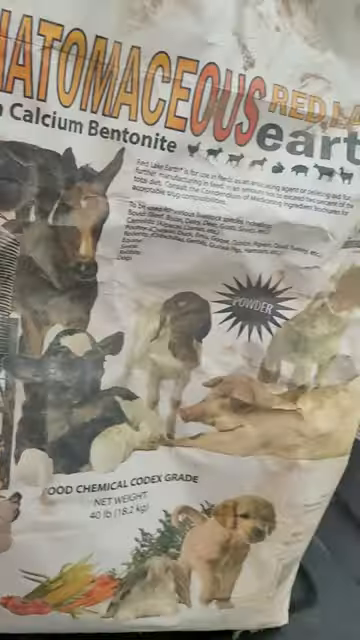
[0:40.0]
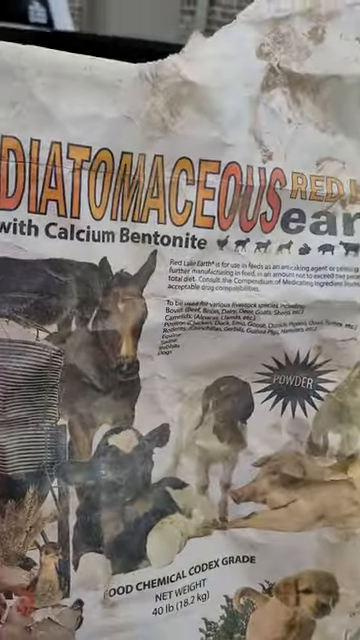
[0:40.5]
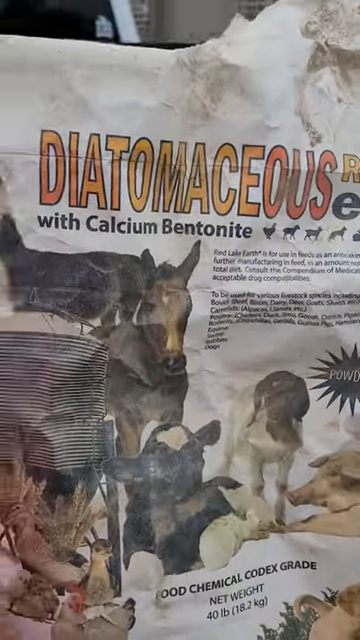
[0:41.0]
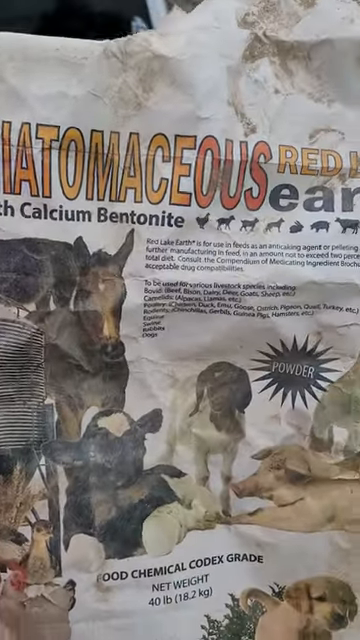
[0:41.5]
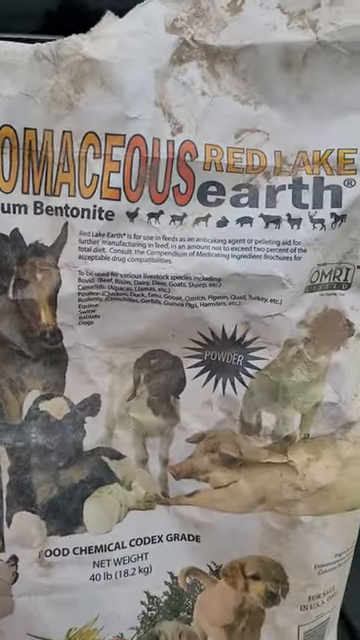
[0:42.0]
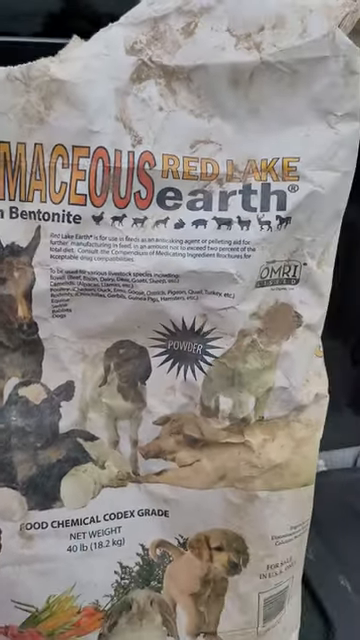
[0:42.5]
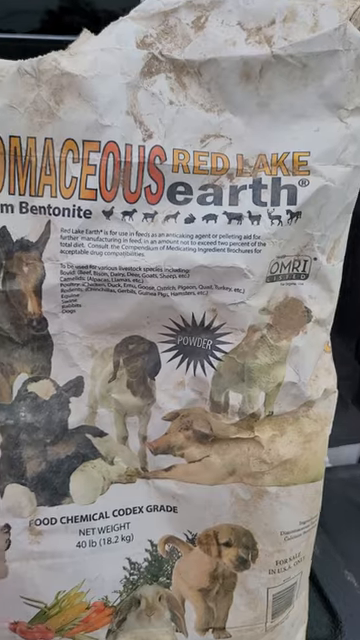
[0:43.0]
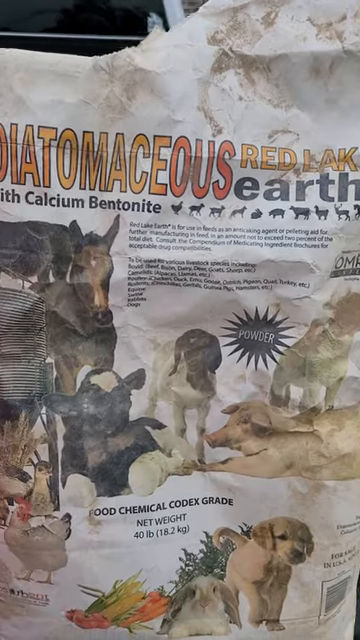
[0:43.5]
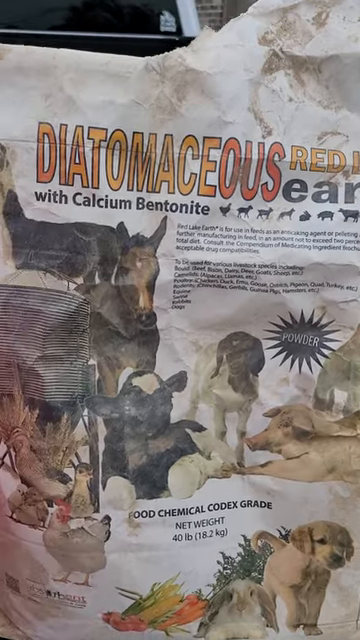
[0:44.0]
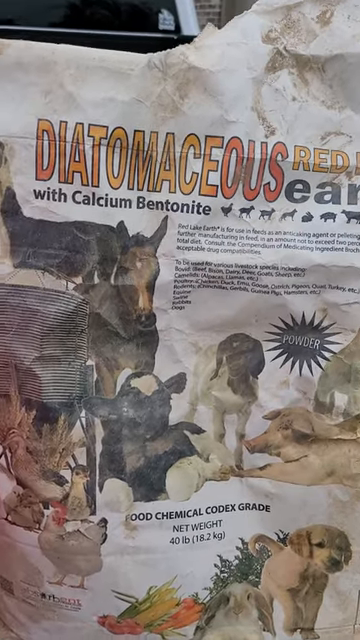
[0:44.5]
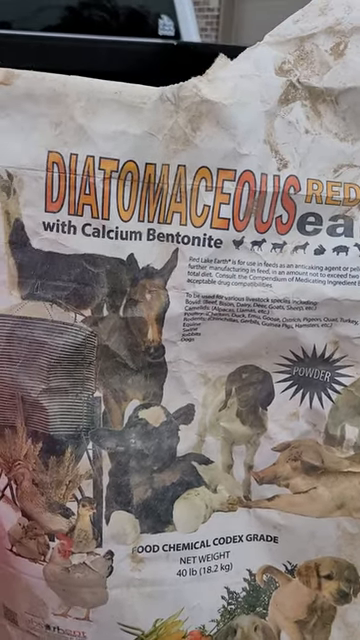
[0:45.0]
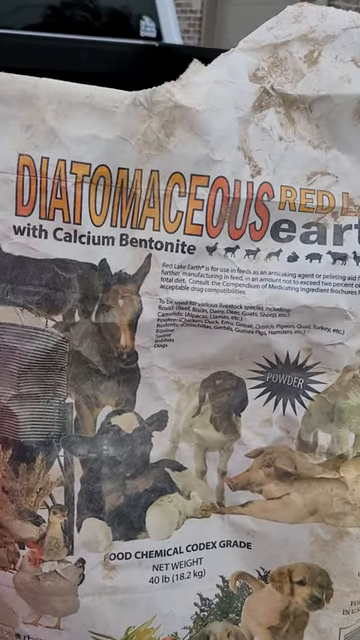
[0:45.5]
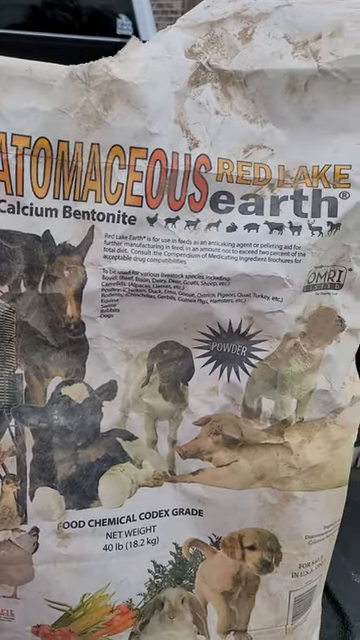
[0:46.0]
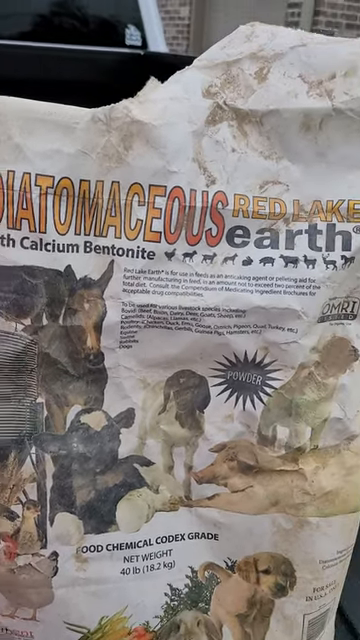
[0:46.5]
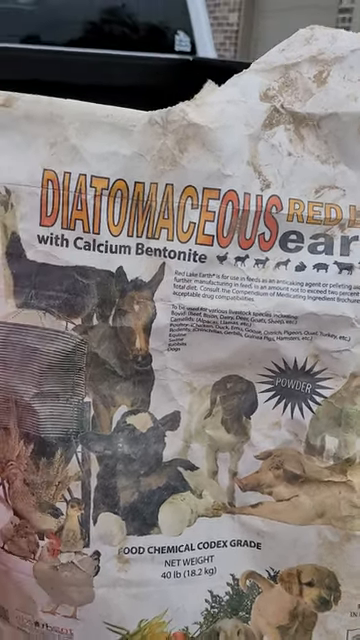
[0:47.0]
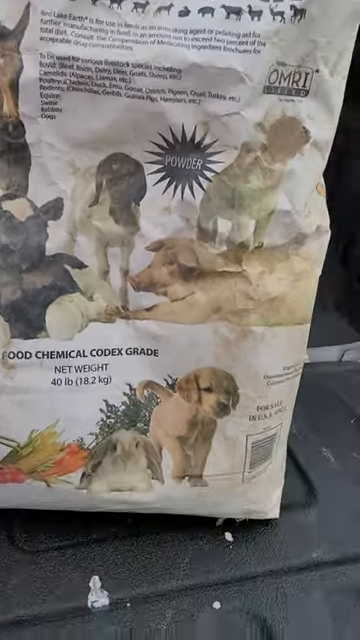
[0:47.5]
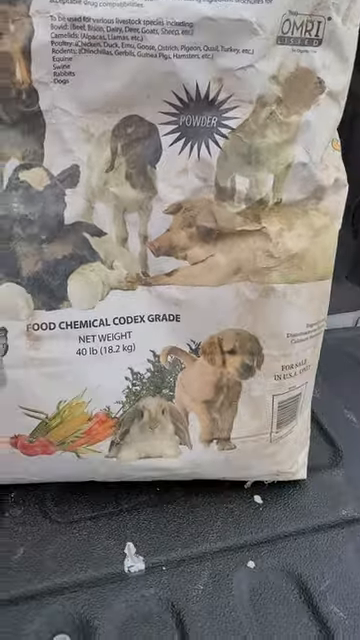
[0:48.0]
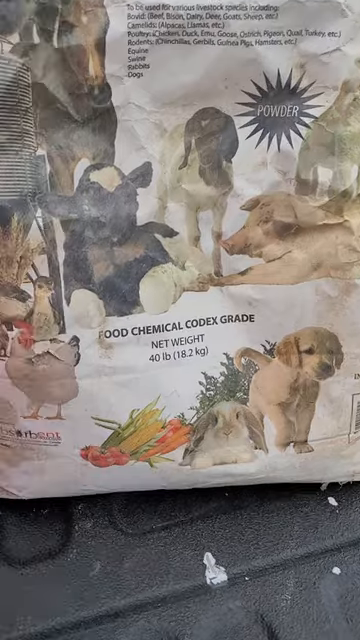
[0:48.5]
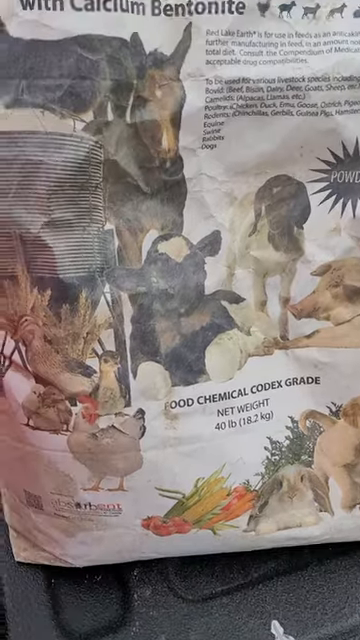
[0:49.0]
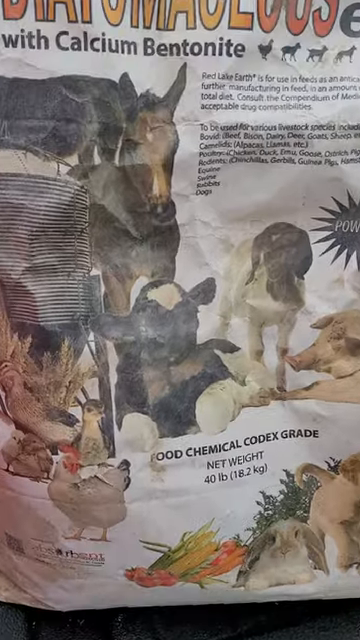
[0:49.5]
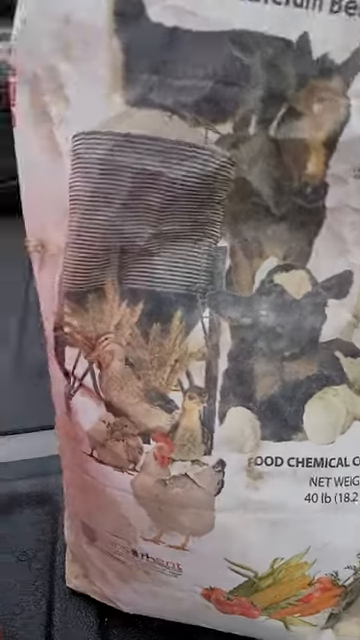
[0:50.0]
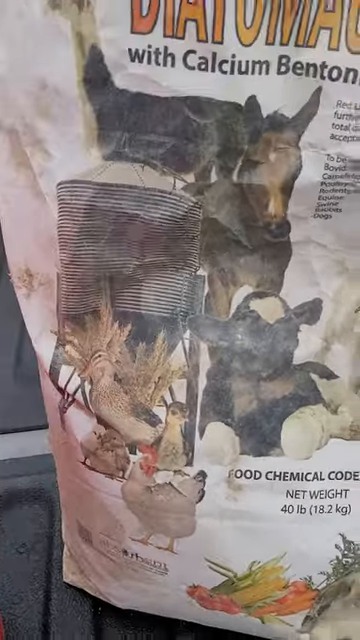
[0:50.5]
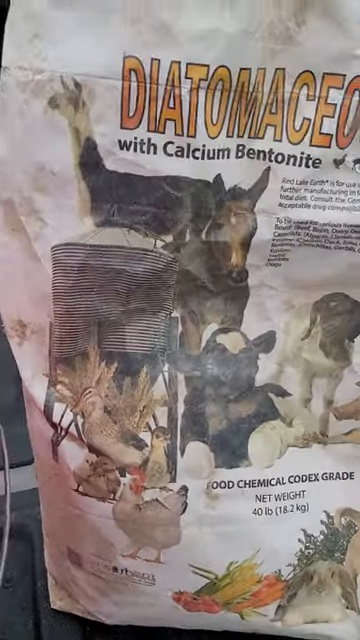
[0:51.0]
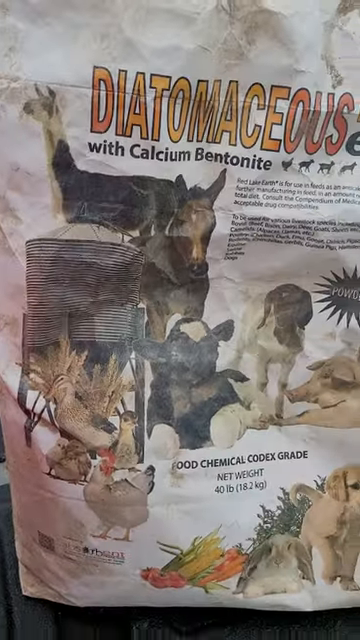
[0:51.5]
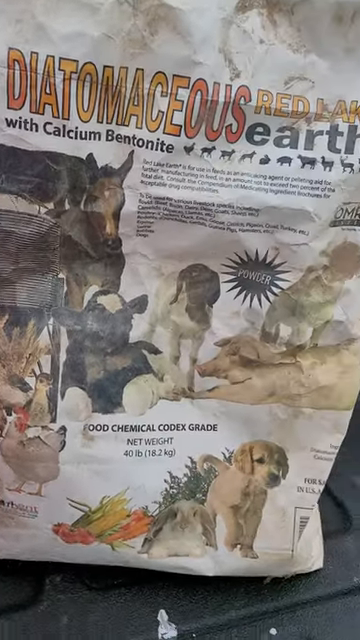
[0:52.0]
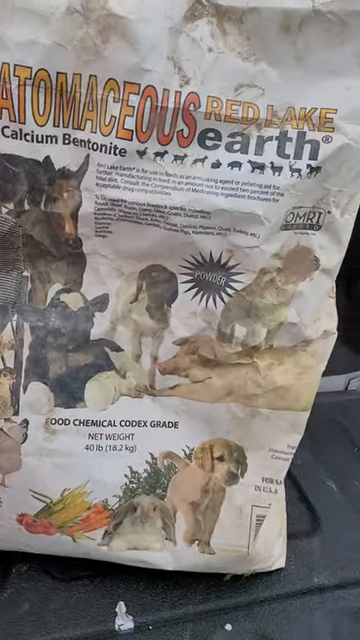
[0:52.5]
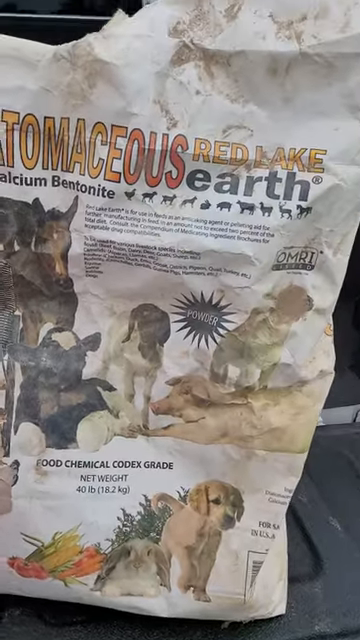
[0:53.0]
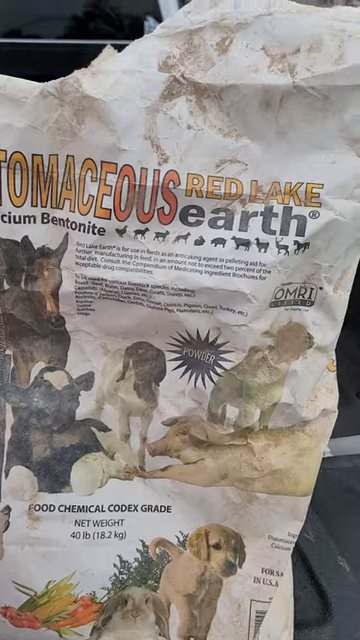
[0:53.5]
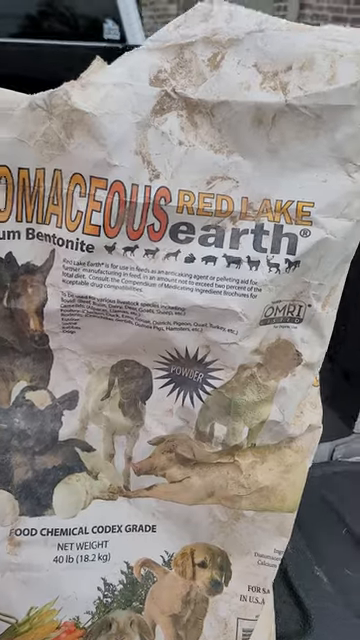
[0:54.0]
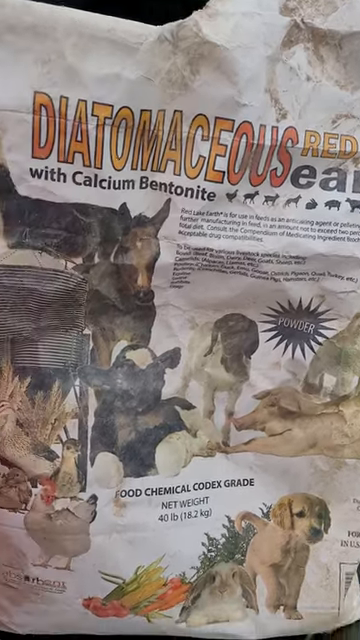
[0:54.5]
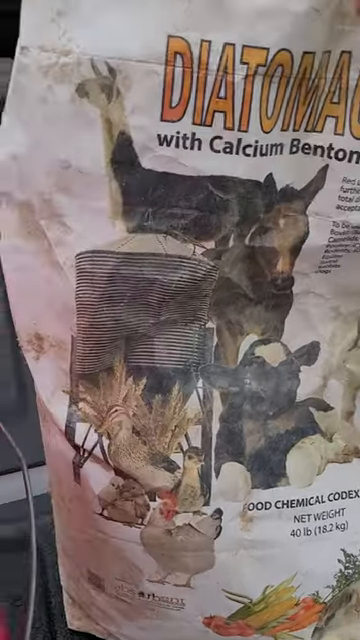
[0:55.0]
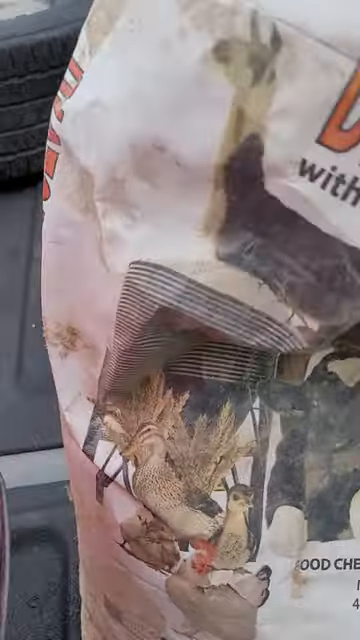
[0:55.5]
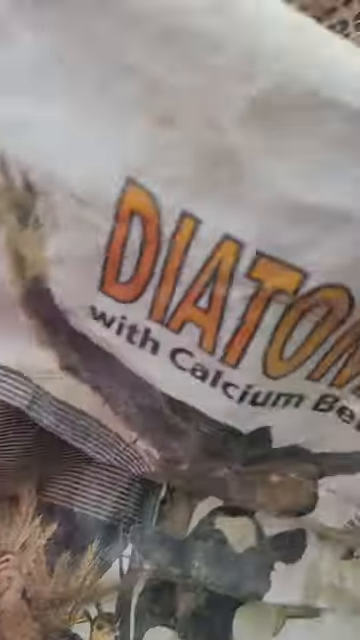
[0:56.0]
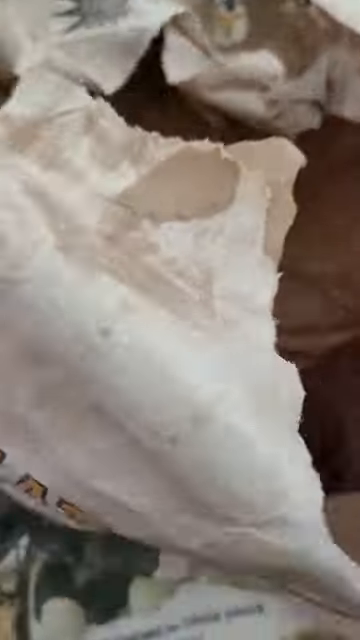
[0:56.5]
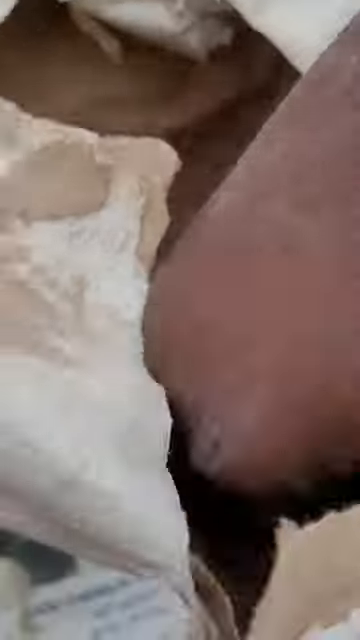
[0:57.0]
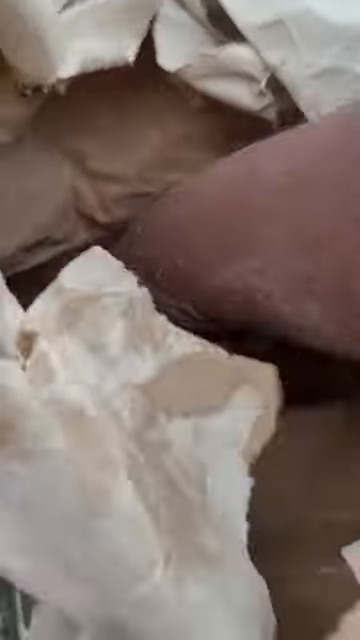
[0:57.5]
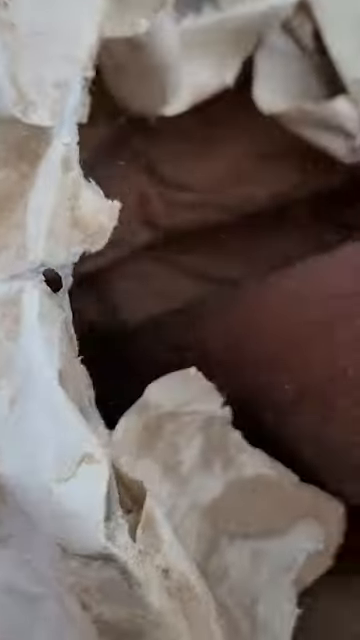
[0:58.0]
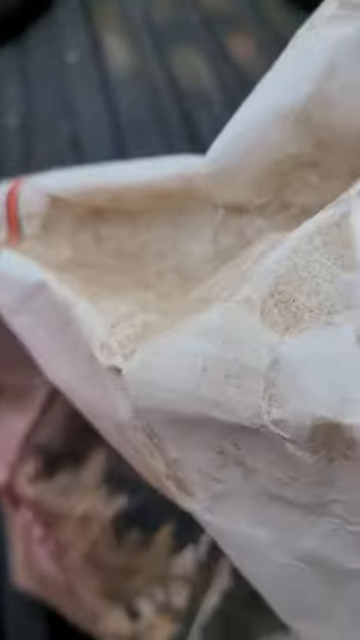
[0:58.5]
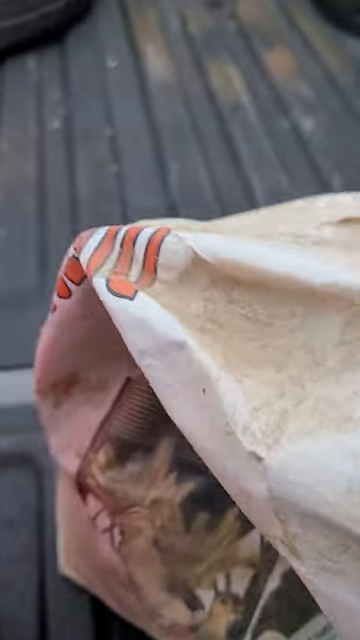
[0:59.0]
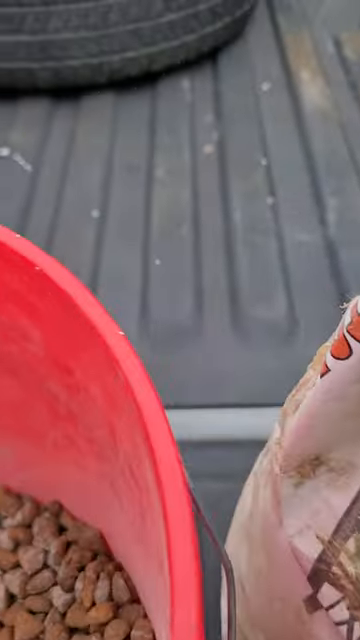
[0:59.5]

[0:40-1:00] The white bag of what looks like dog food or animal food stands vertically on the end of the truck bed; at the bottom it says "food chemical codex grade". The camera moves in a kind of square rotation around the bag. He shakes the bag, and the camera continues showing it; part of the top looks ripped open, as the right-hand side of the top is a little taller than the left-hand side. The camera holder shows the inside of the bag and puts a hand inside it, and the inside of the bag appears to contain a black or brown food-like substance.